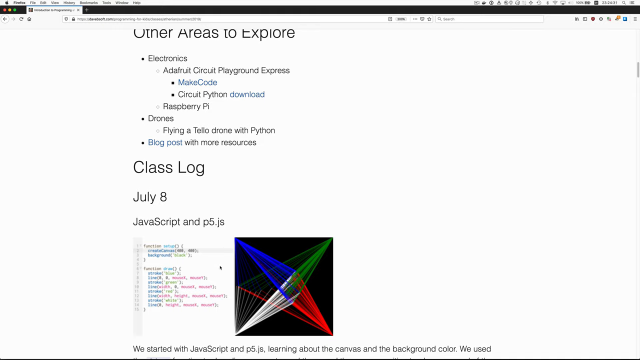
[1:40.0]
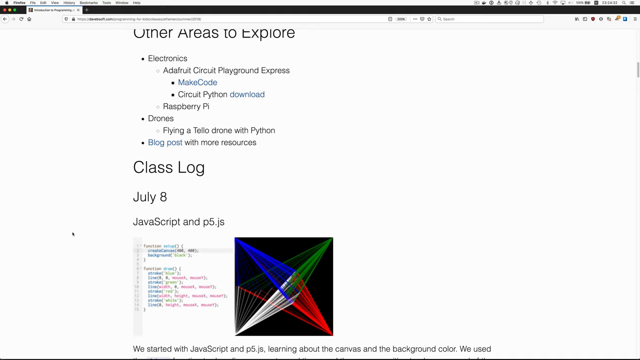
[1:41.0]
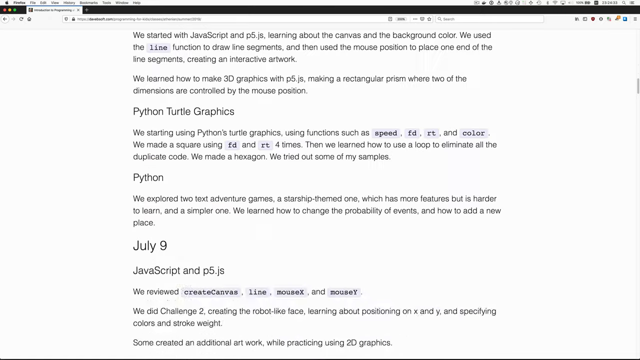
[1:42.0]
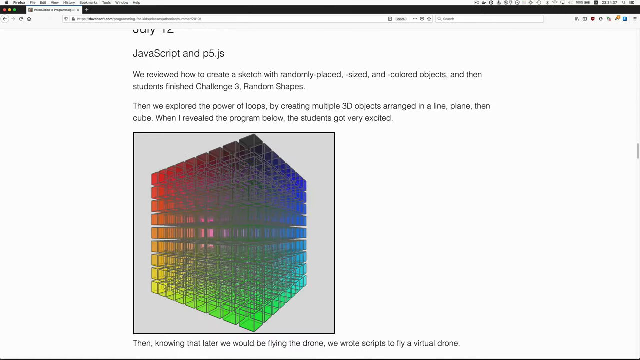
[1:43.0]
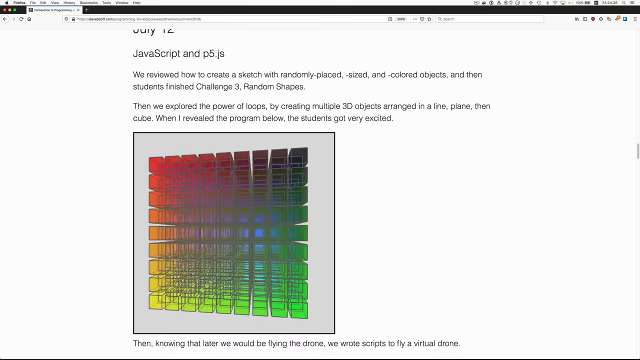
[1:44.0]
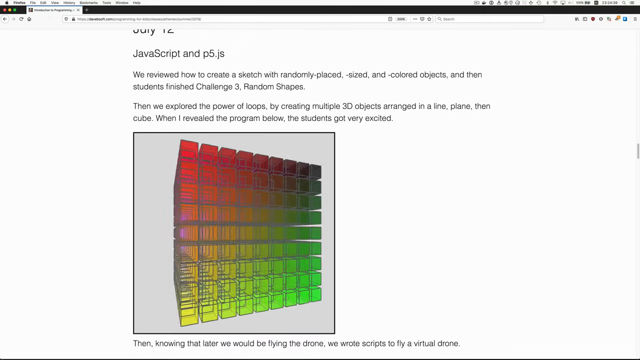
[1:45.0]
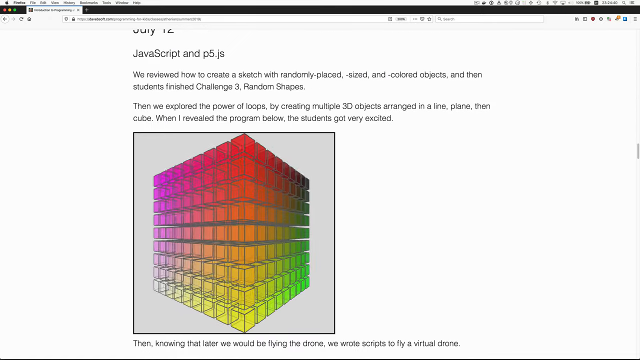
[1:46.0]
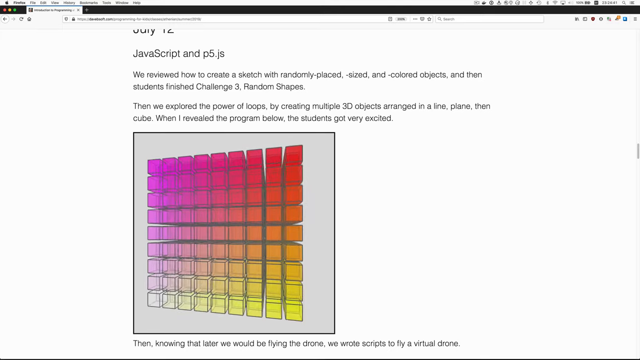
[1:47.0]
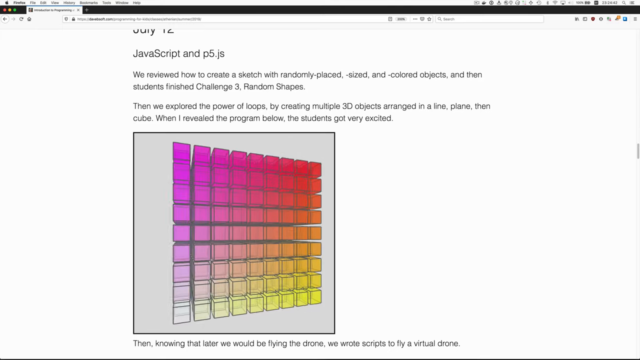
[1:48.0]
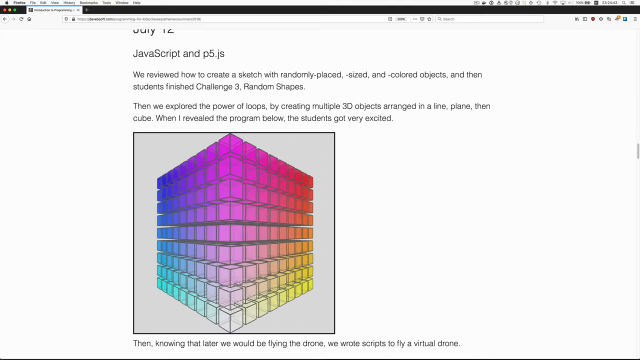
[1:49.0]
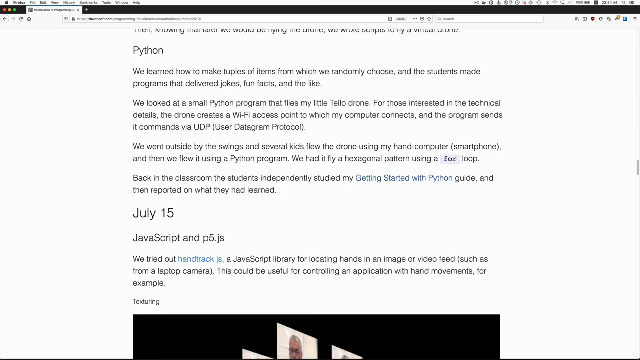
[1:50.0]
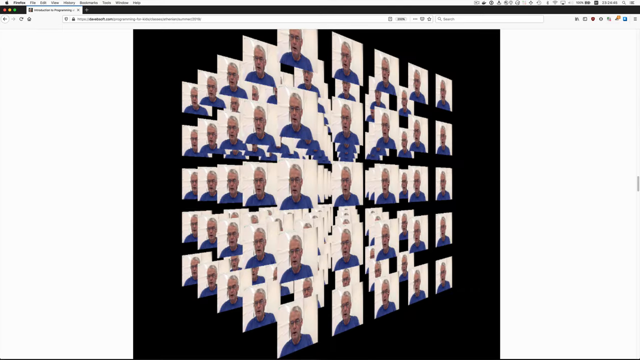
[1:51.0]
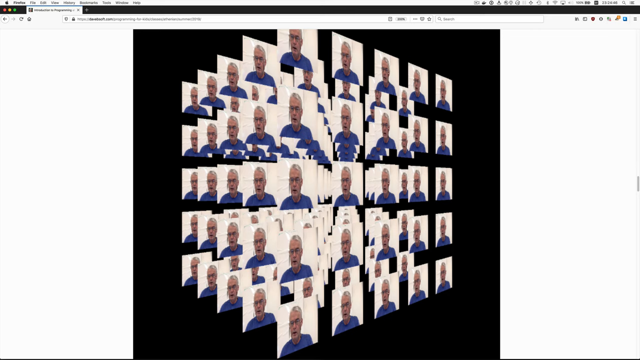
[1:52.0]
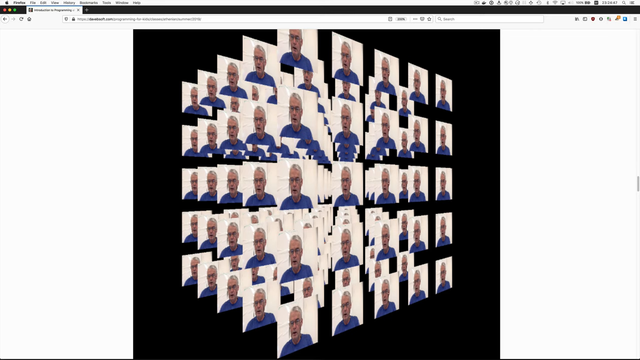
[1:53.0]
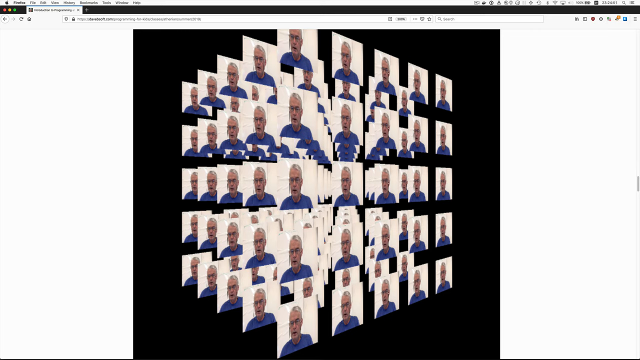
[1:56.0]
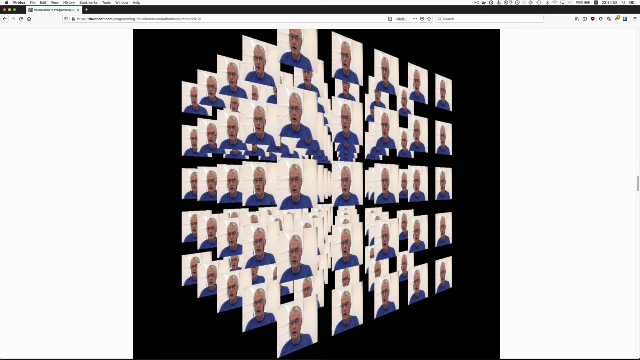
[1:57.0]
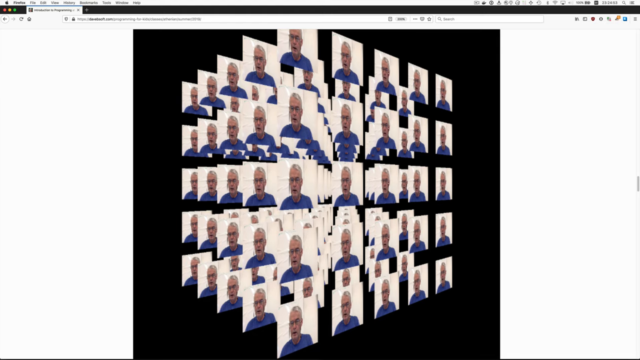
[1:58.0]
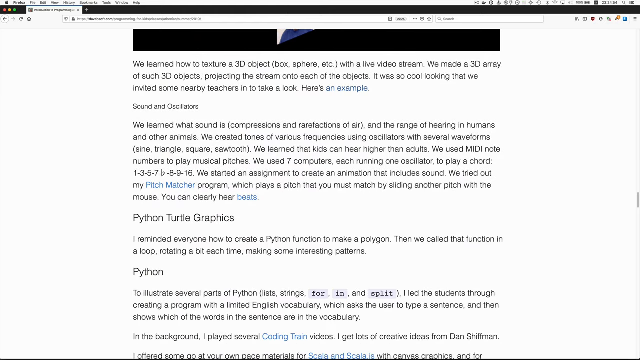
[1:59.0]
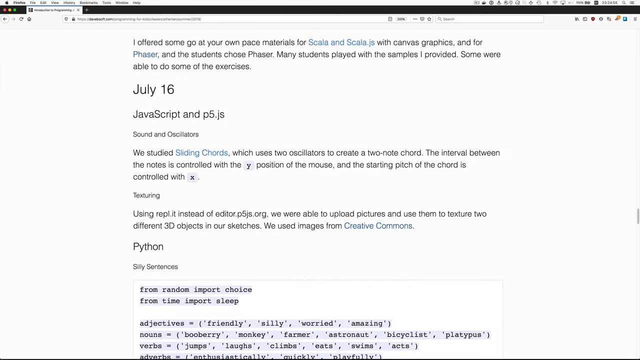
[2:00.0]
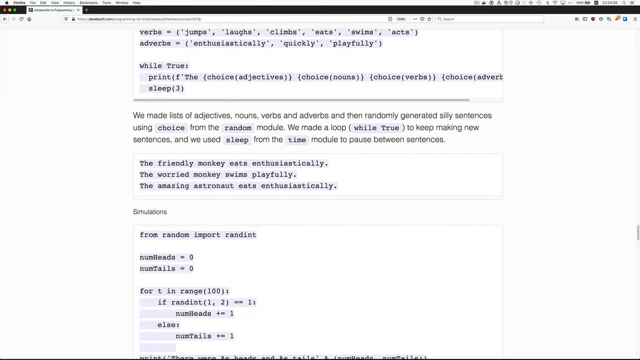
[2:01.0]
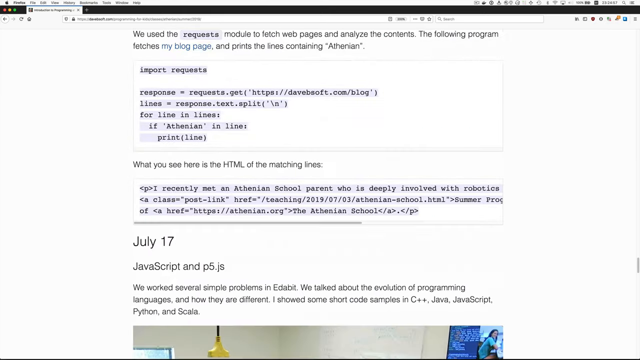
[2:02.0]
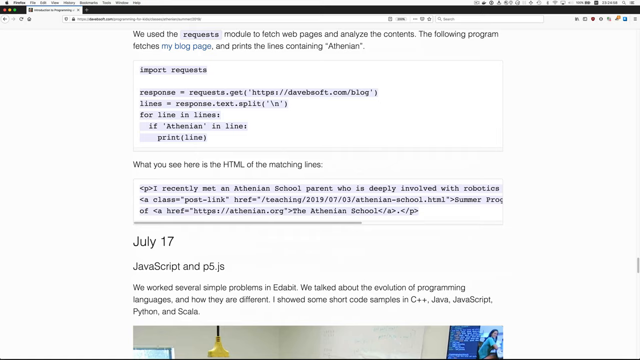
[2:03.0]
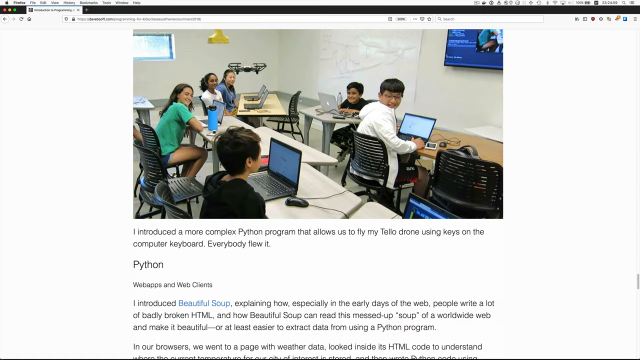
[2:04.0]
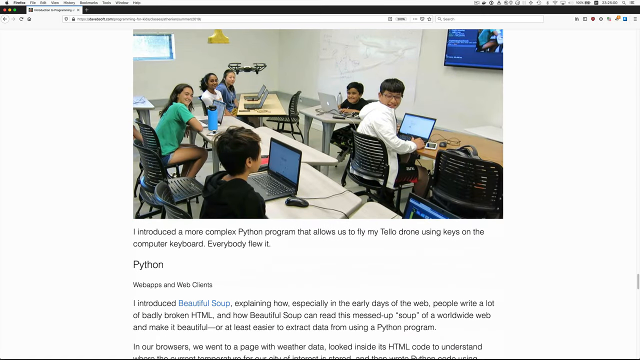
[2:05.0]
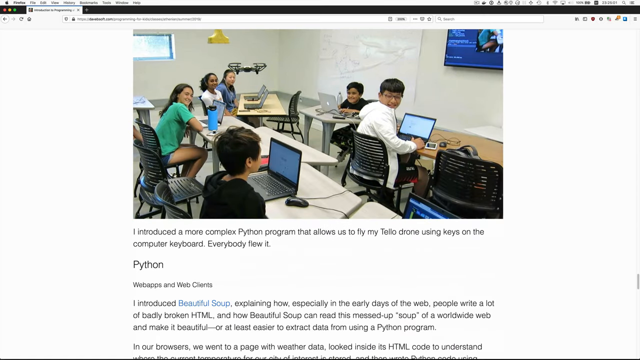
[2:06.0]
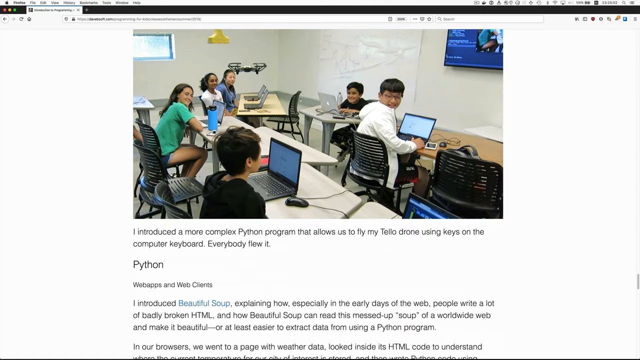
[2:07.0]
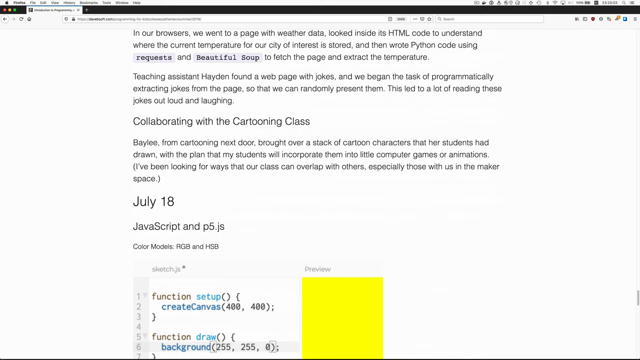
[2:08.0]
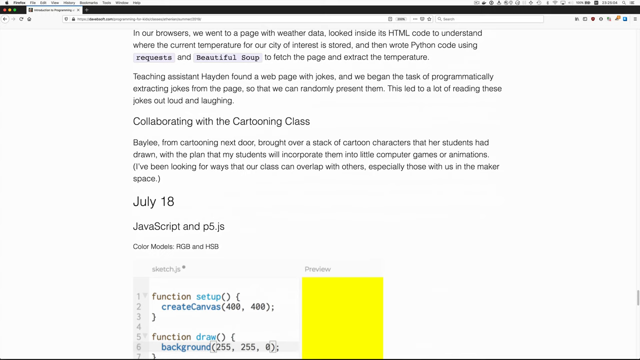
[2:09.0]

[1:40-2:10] A page has the heading "other areas to explore". Under it are the words "electronics", "circuit playground express", "make code", "circuit python download", "raspberry pi", "drones", "flying a tele drone with python", and "blog post with more resources". Below that is "class log", with "july 8" and under it "javascript and p5.js". The view moves a little down the page to the JavaScript and p5.js entry, which reads "We reviewed how to create a sketch with randomly placed sized coloured objects and then students finished challenge three random shapes. Then we explored the power of loops by creating multiple 3D objects arranged in a line plane then cube. When I revealed the program below the students got very excited." Underneath is a very colourful gridded image on a screen, which appears to be a computer image that has been programmed or created. The view then goes to a page with a black background and many images of a man in a blue top.